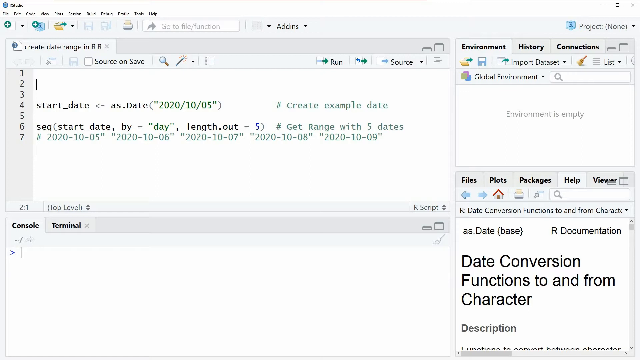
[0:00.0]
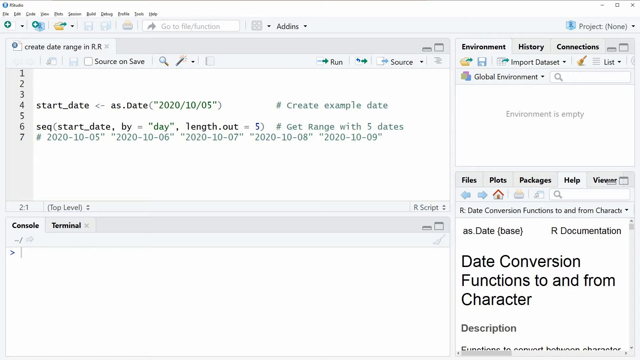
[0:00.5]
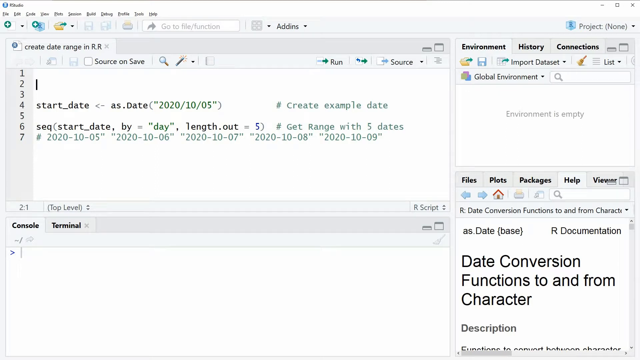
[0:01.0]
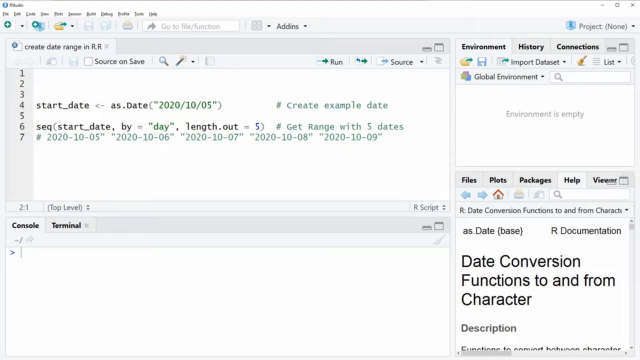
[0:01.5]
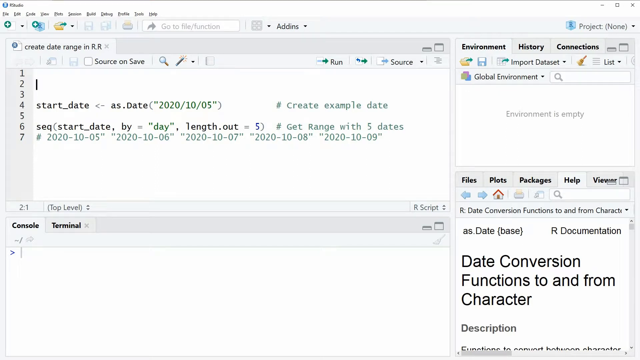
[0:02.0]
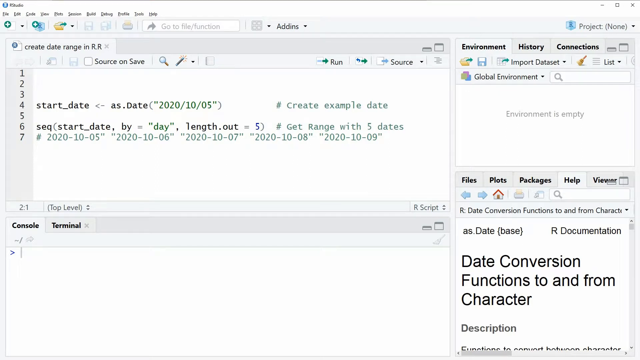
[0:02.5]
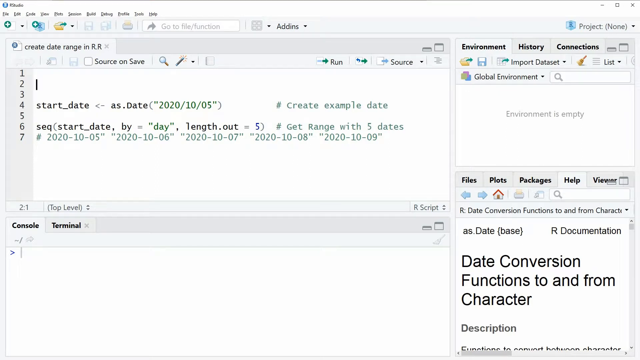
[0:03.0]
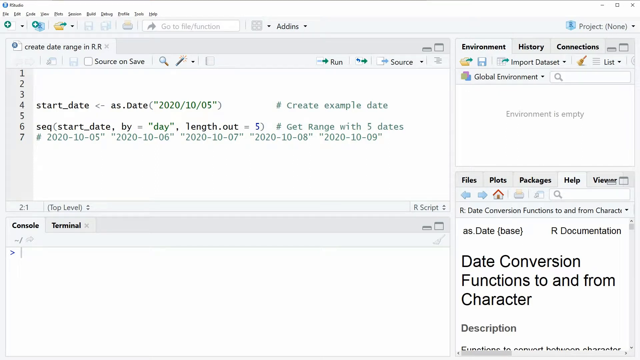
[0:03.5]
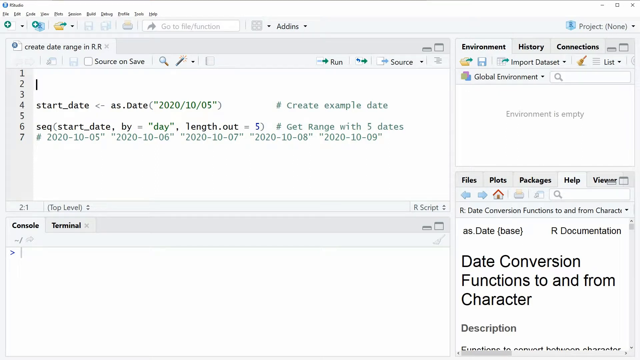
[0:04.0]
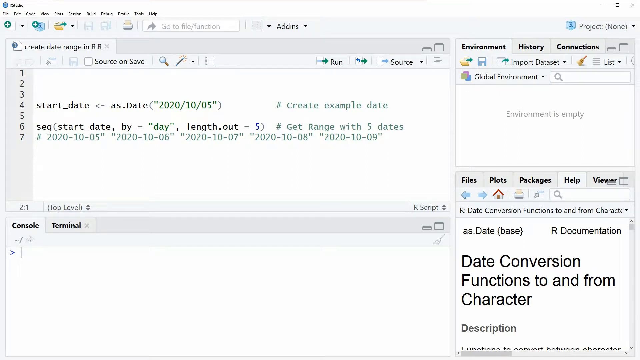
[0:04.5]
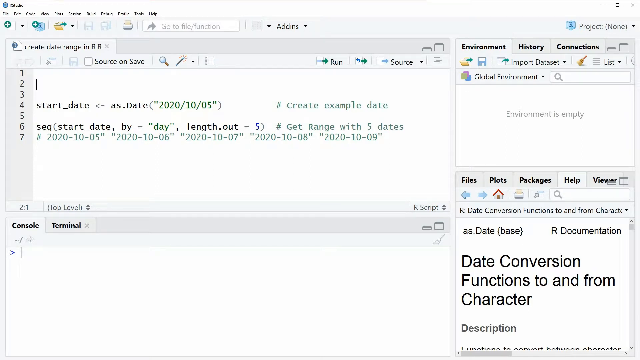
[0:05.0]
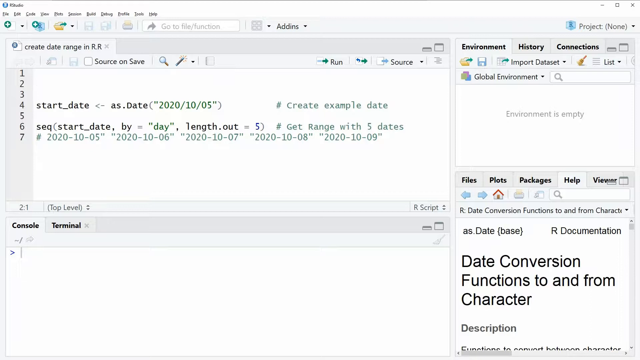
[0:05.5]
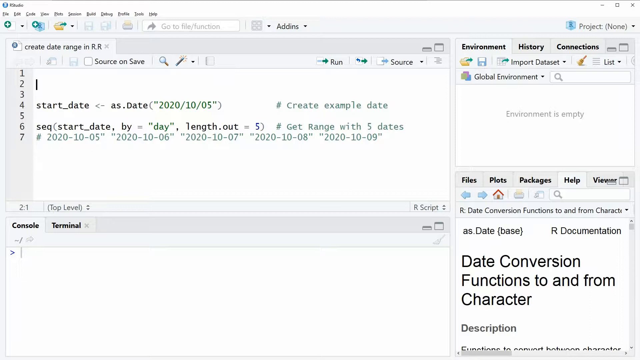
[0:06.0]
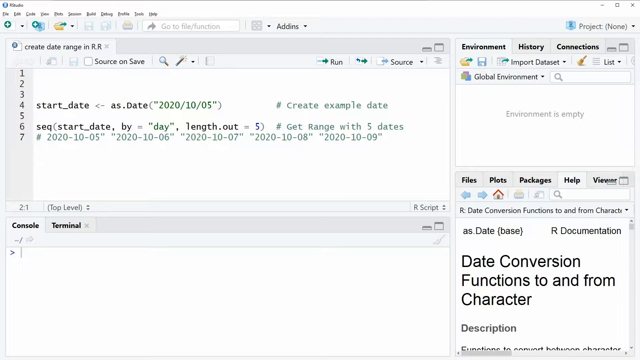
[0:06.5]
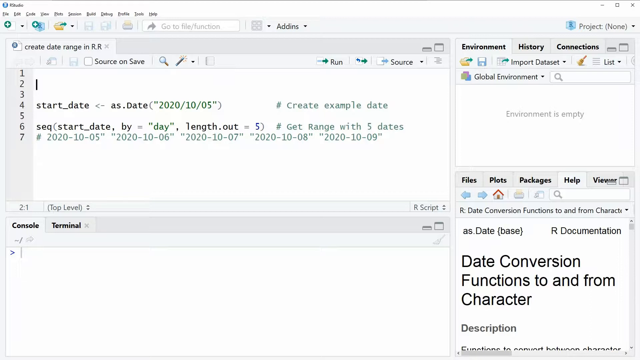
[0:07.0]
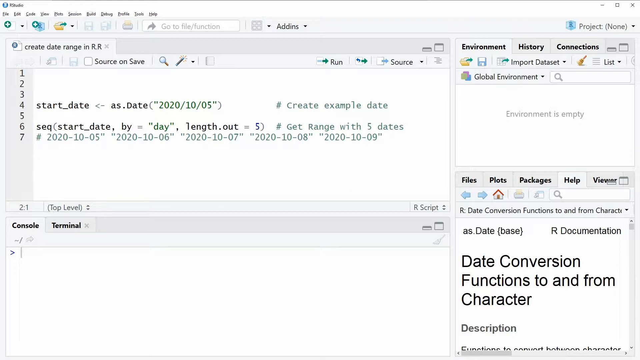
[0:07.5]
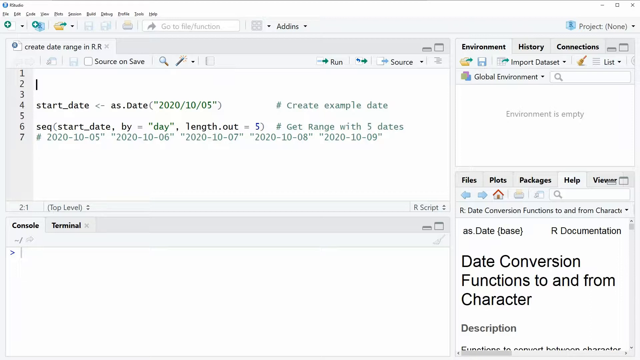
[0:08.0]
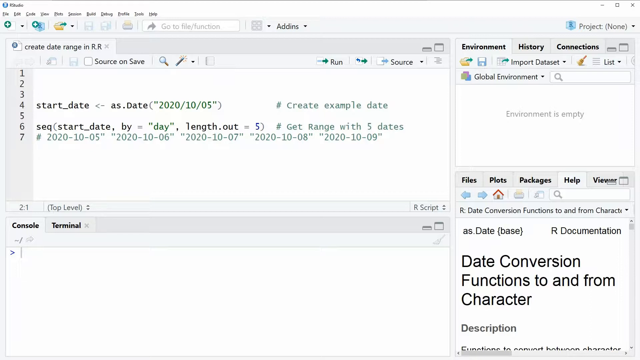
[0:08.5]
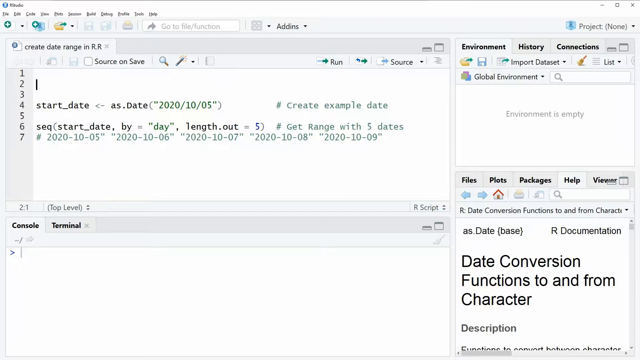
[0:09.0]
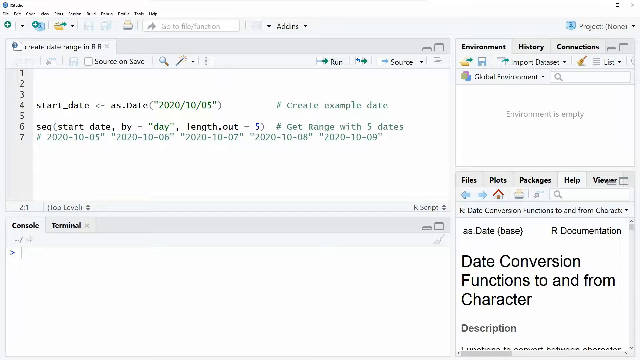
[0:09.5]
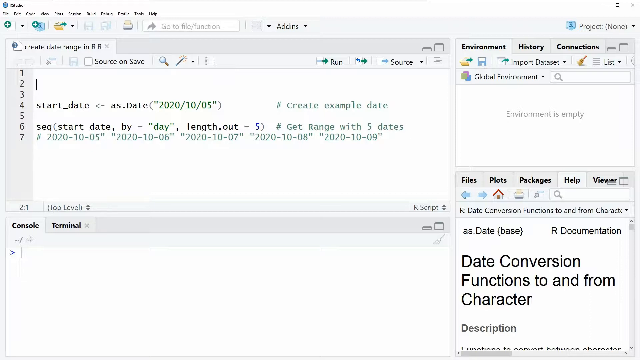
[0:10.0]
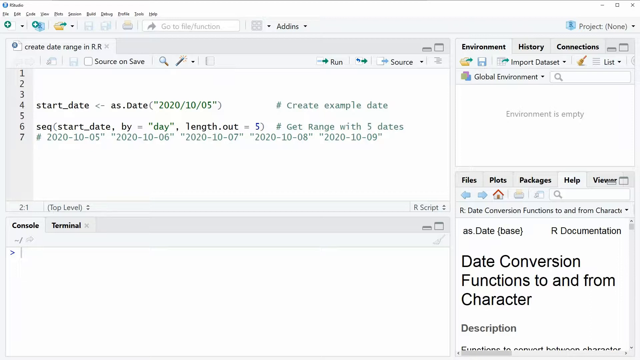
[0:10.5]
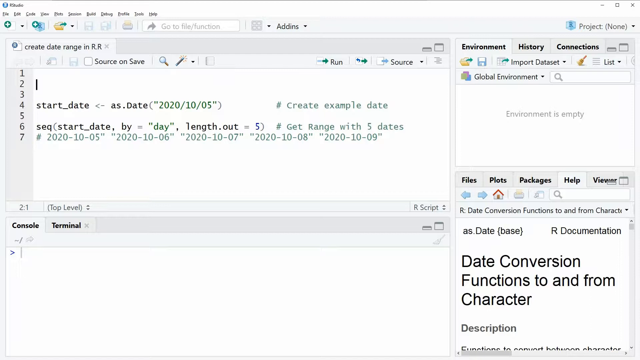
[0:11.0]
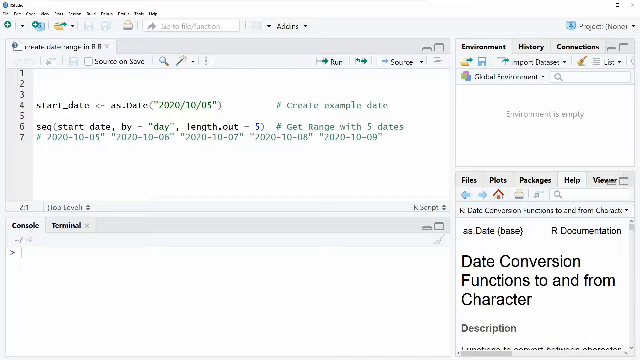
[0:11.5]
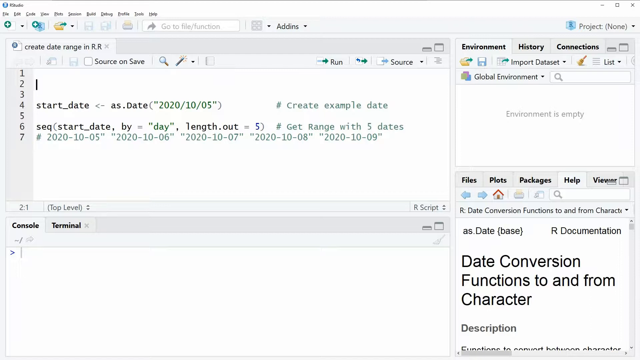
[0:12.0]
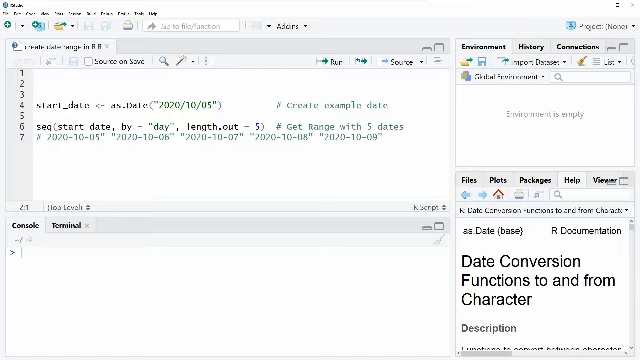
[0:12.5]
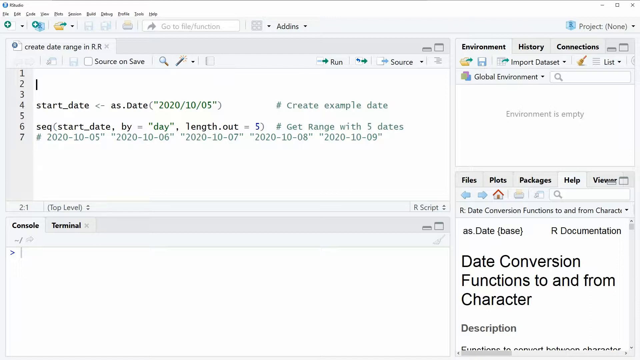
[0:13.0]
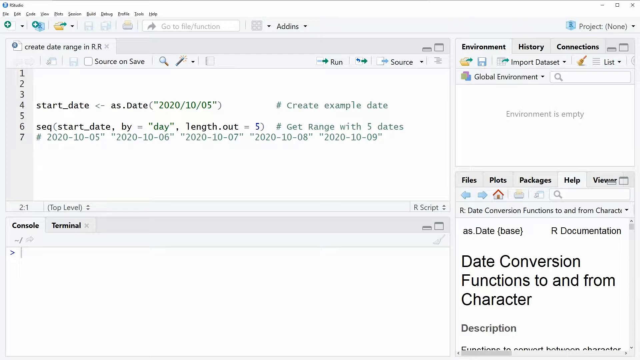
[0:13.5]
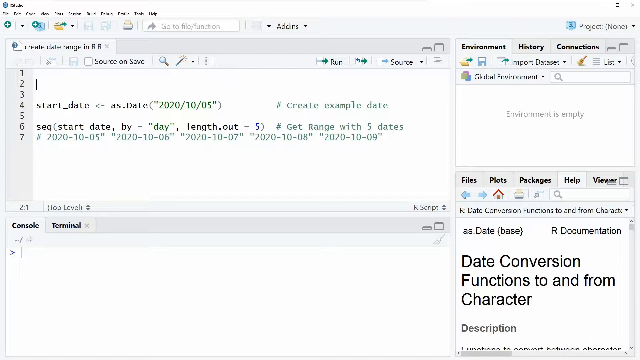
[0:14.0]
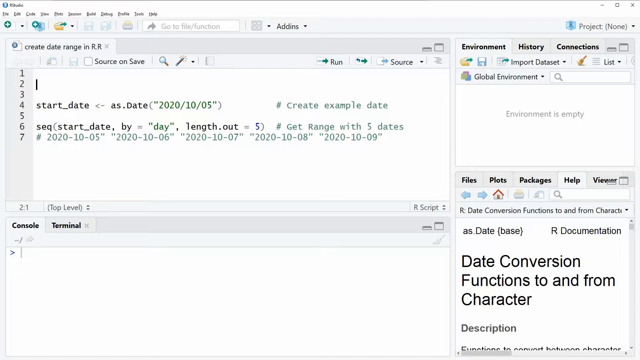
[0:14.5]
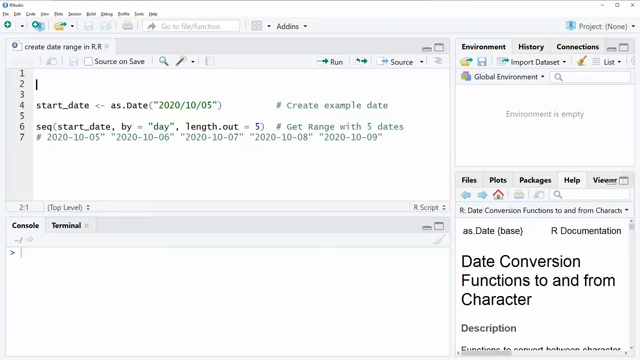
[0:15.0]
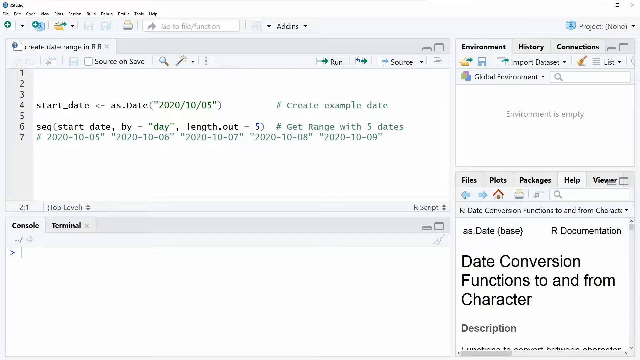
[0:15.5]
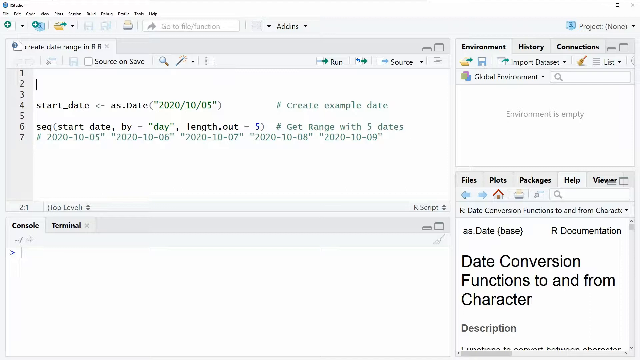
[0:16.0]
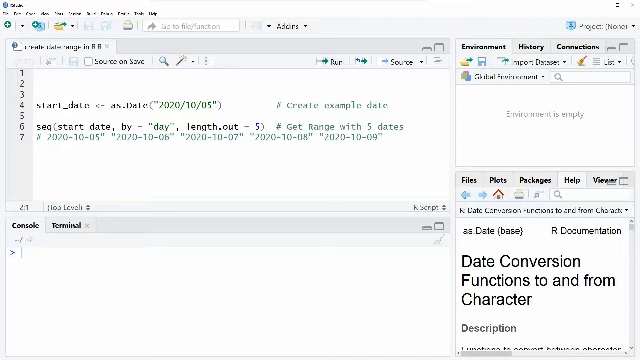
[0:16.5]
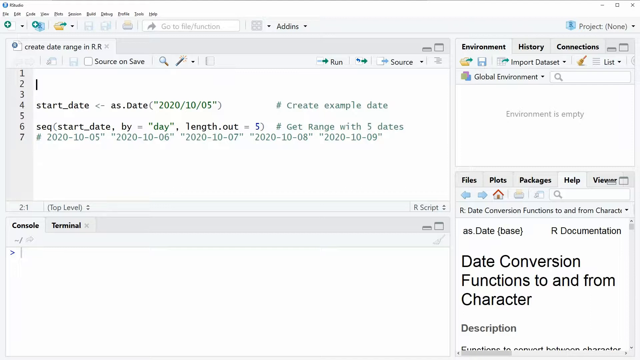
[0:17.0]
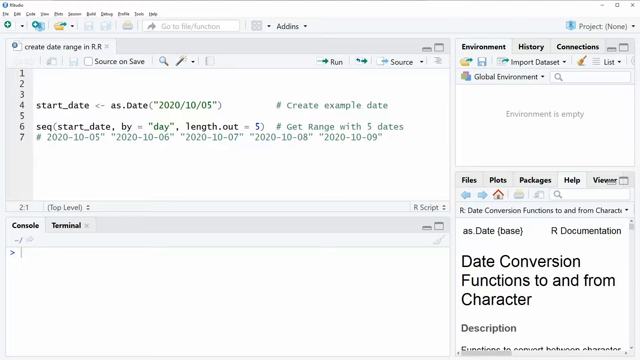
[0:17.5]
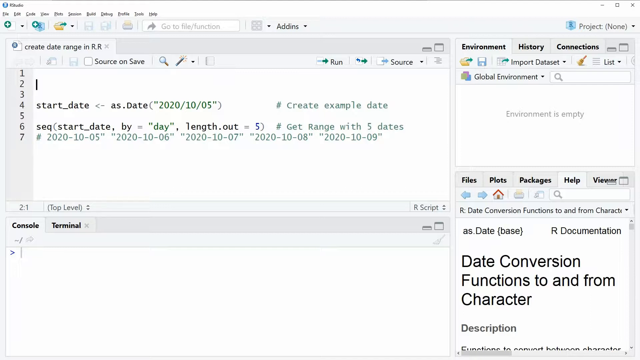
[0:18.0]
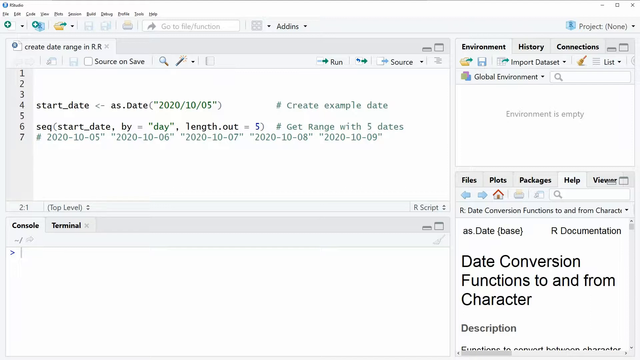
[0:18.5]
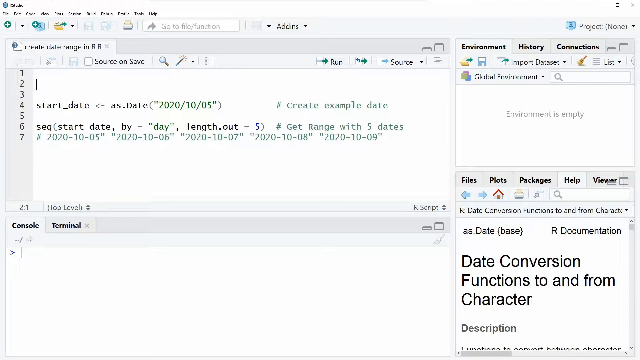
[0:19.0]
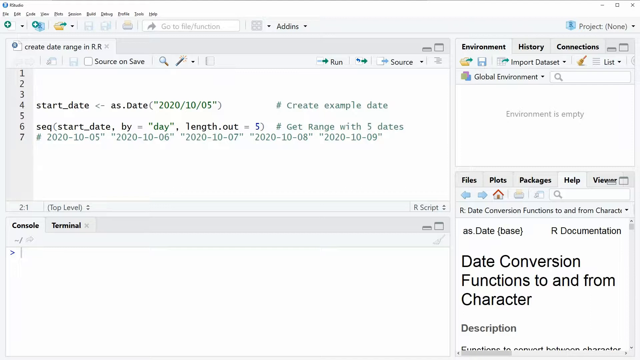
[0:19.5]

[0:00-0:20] Numbers and letters of various kinds appear on a white background, in green and black text. The text is code, including the words "start date" and open and close parentheses, laid out on lines that are numbered by row, and some of it appears on the right-hand side of the screen.